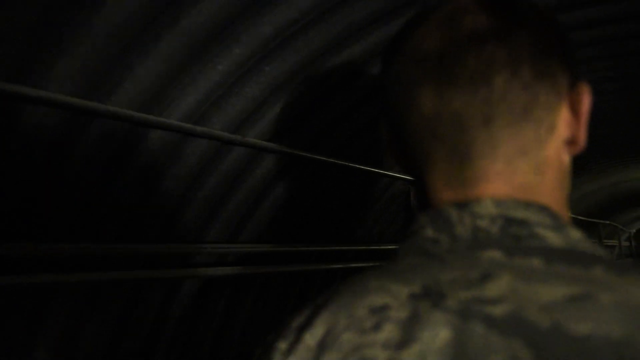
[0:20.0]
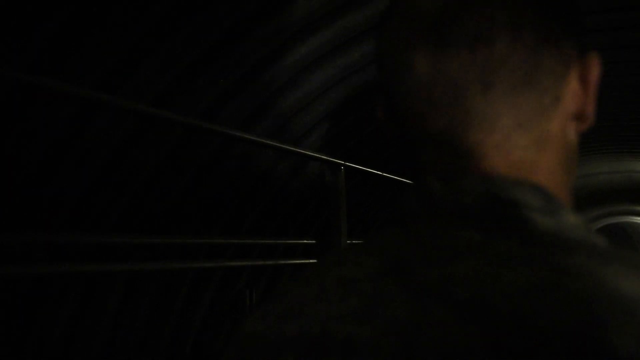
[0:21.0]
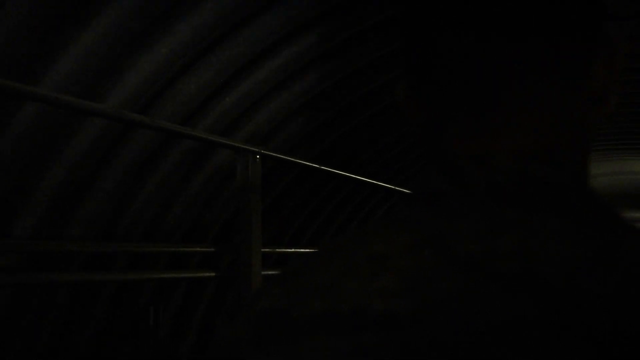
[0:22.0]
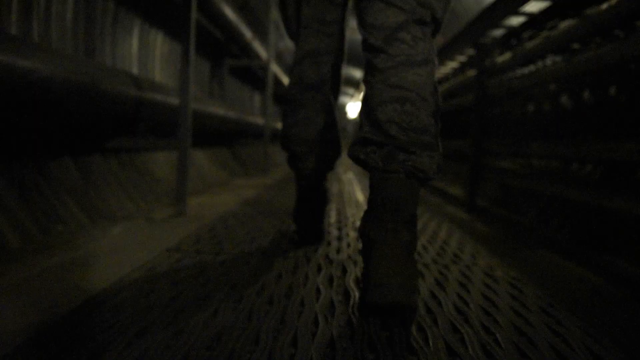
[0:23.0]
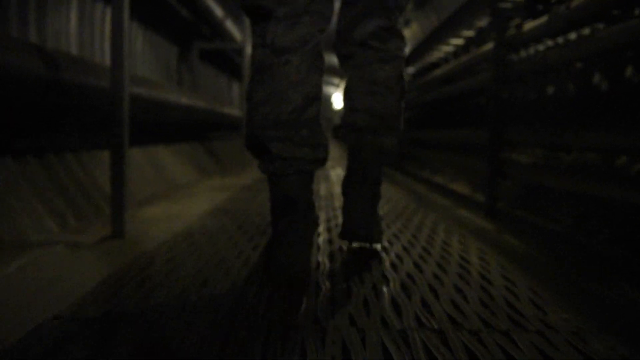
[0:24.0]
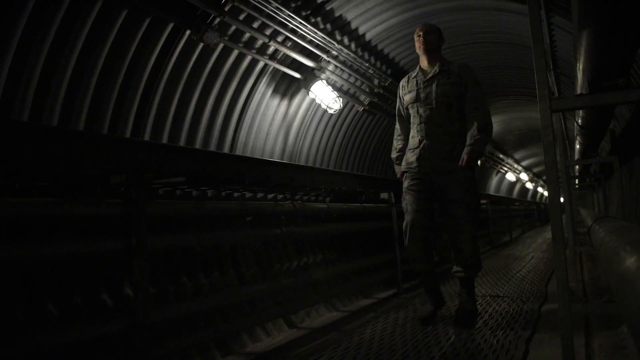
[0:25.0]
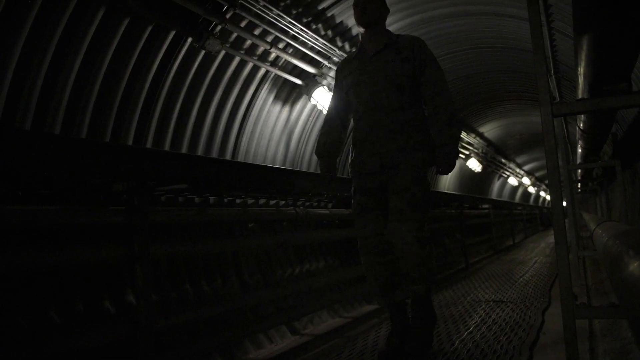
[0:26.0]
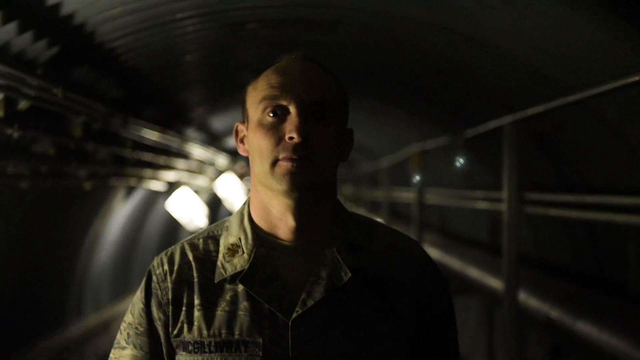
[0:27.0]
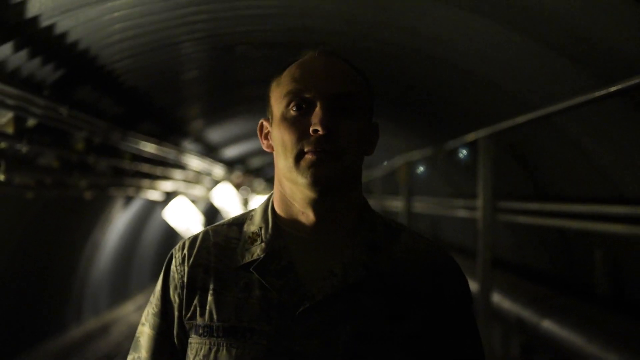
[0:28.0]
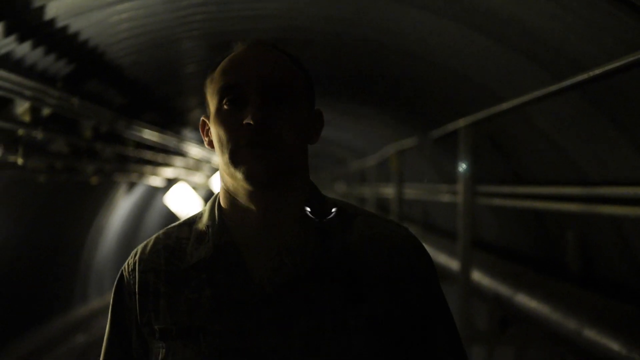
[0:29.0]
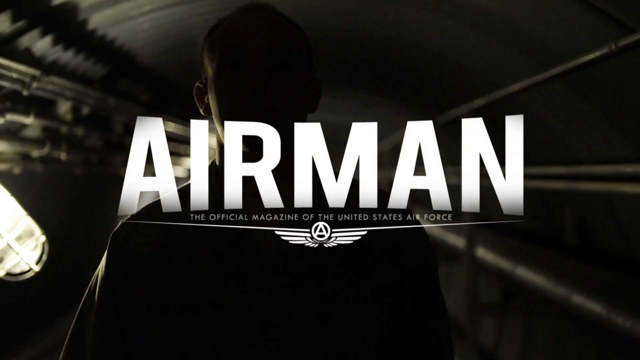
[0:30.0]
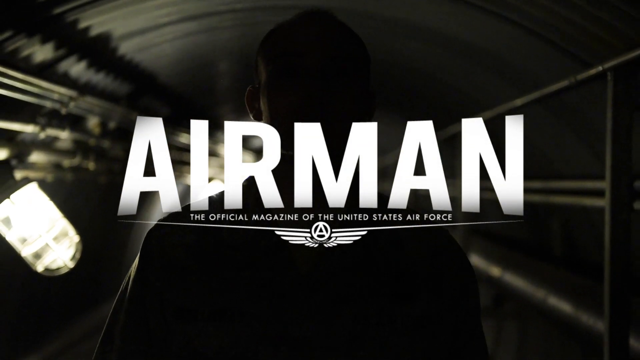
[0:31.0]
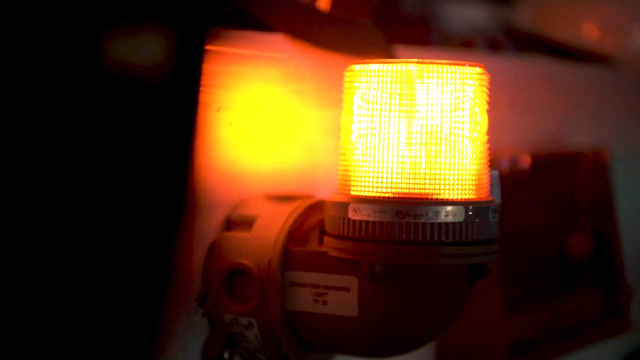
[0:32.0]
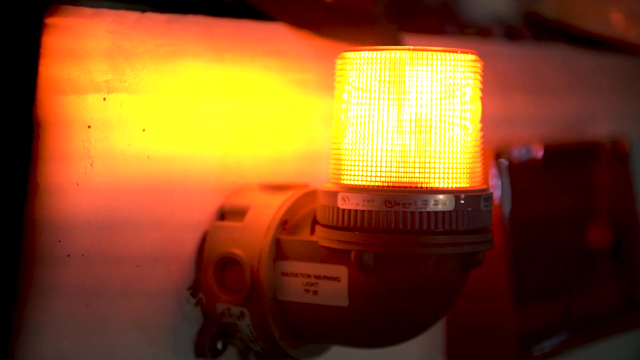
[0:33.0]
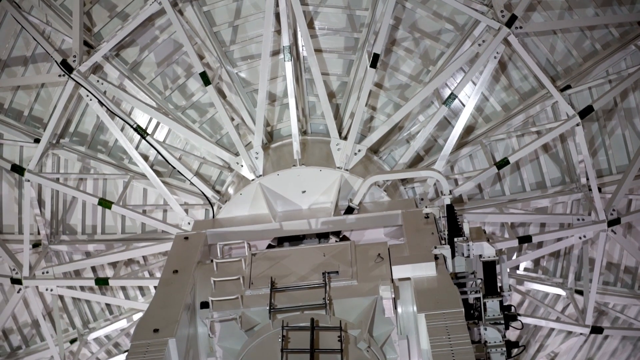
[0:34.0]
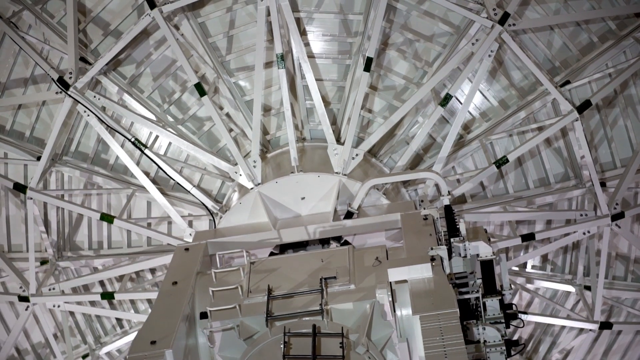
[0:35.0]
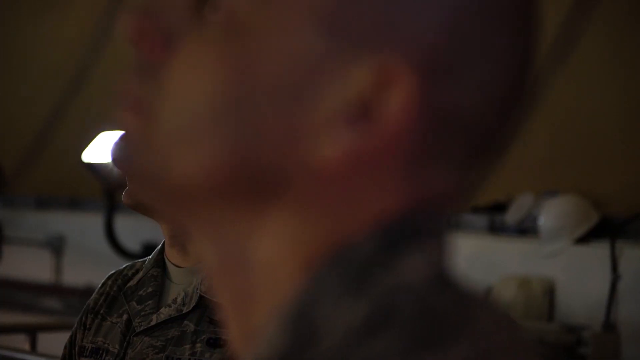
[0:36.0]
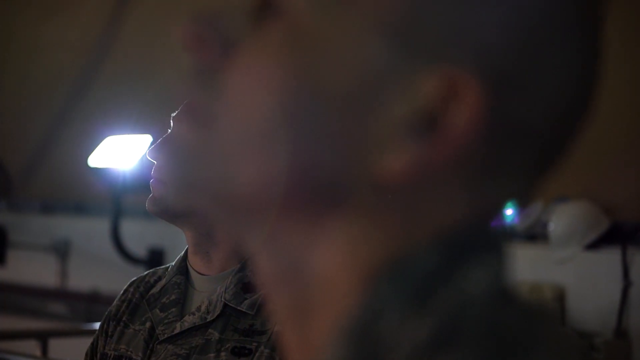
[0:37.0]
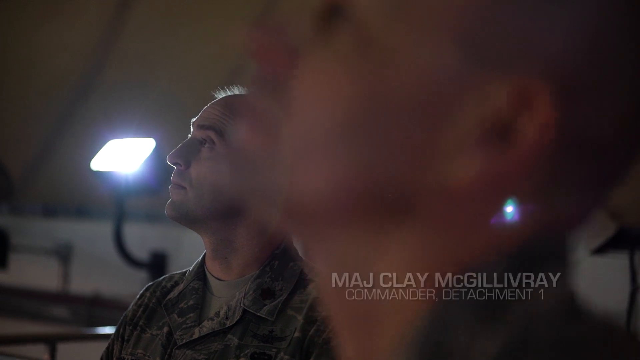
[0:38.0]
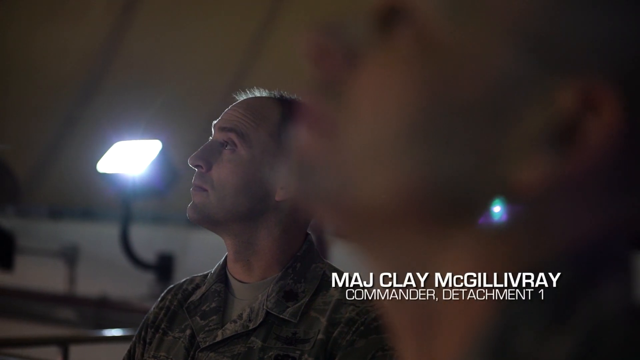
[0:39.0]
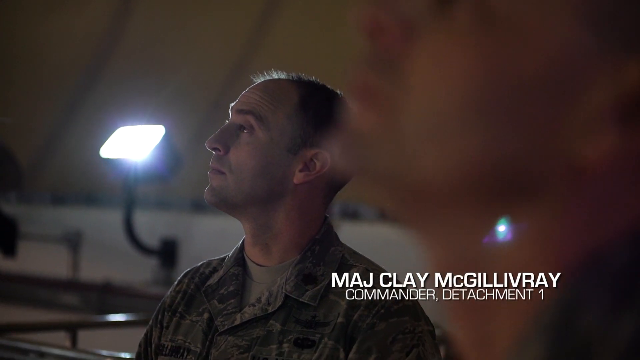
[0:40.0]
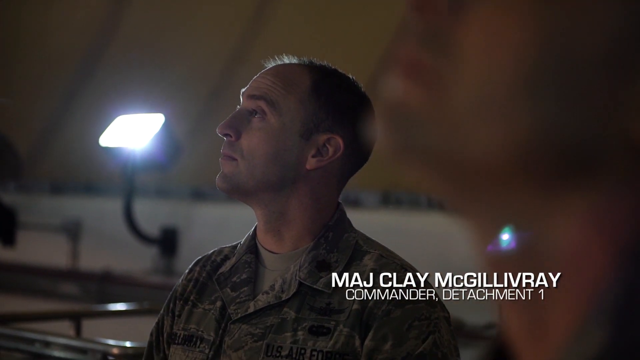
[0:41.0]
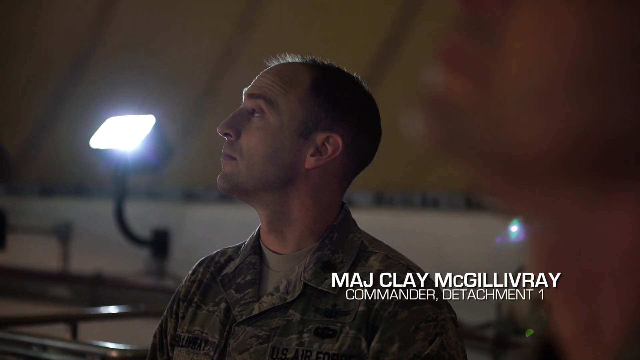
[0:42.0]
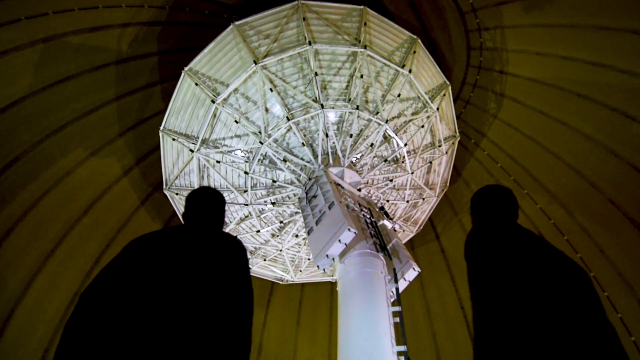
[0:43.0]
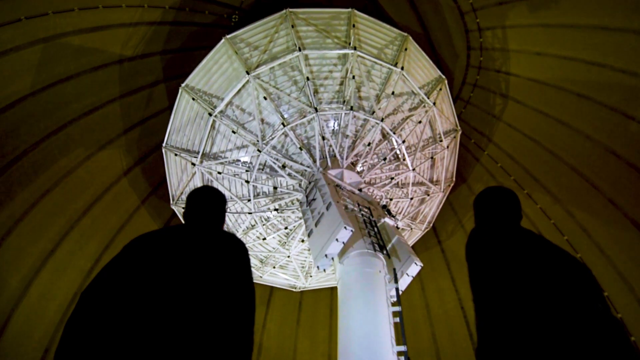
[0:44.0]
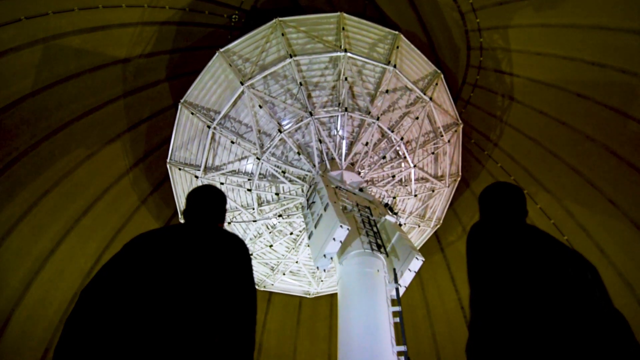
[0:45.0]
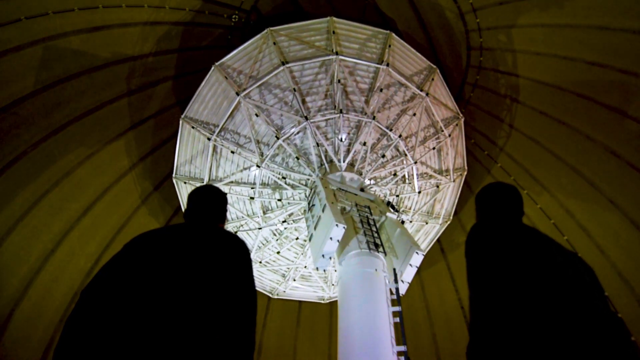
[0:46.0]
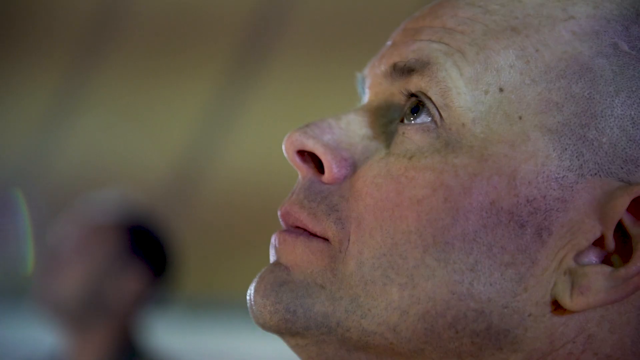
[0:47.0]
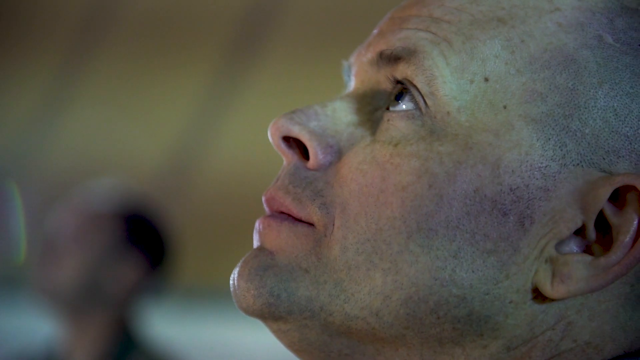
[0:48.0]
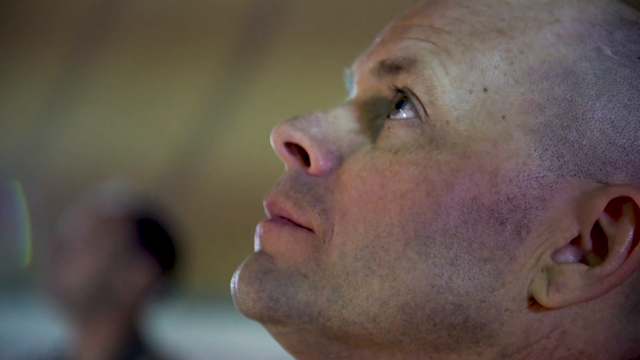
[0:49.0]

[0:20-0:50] A man with a short military haircut and a camo-printed uniform is seen from behind, walking through a dark building; the footage seems slightly slowed down. The camera pans down to the soldier's feet as he walks along a large metal walkway lined with lights; the walkway arches overhead and somewhat resembles a tunnel. The man's face is then seen as he walks through the tunnel, light falling on one side of his face while the other half is completely dark, and his face darkens as he moves out from in front of the light. Over the footage, text reads "Airman" with "the official magazine of the United States Air Force" underneath. A light blinks, and a large white metal structure is shown. A military commander and a few others look up inside a room; they seem to be looking at a red flashing button, as red flashes play across their faces. They are looking up at a large satellite that moves in a circle.